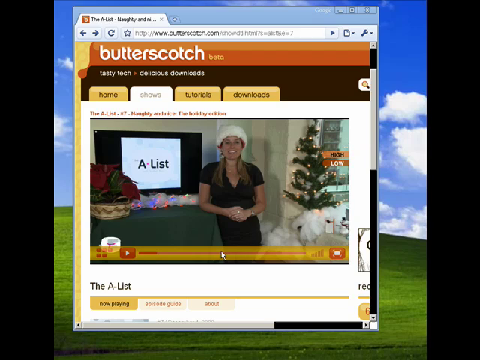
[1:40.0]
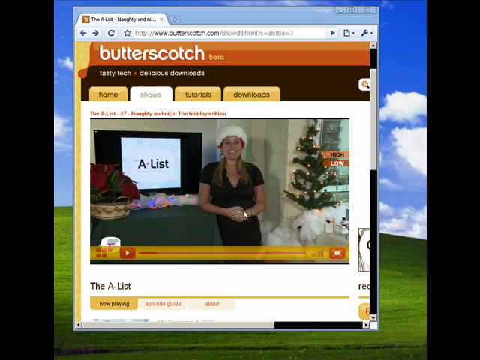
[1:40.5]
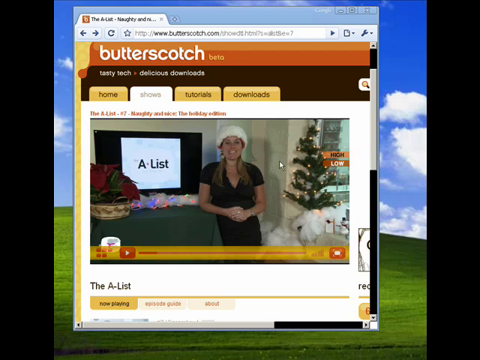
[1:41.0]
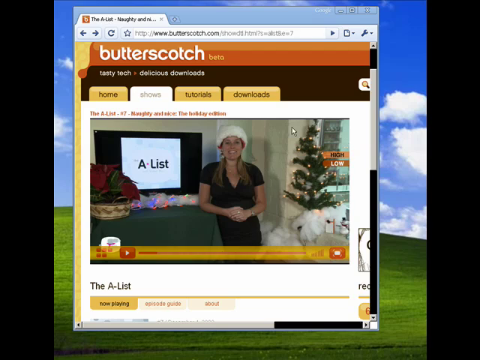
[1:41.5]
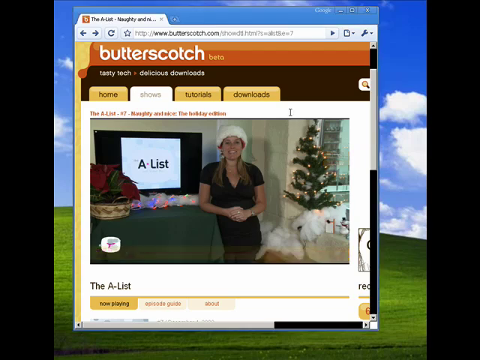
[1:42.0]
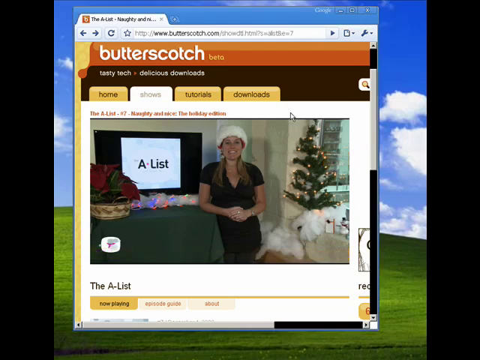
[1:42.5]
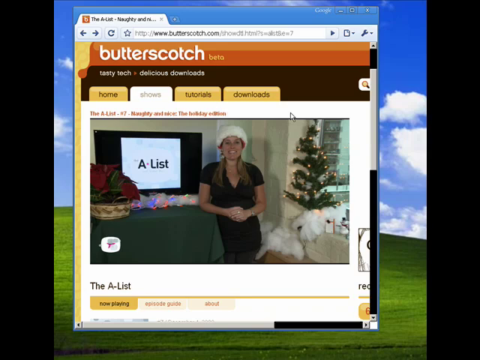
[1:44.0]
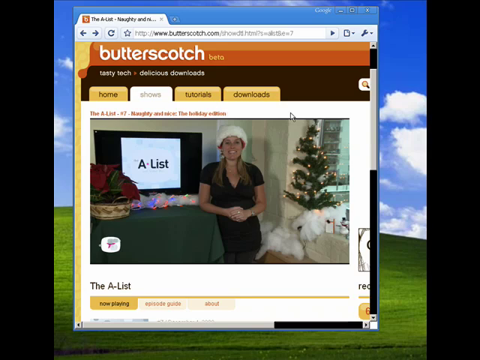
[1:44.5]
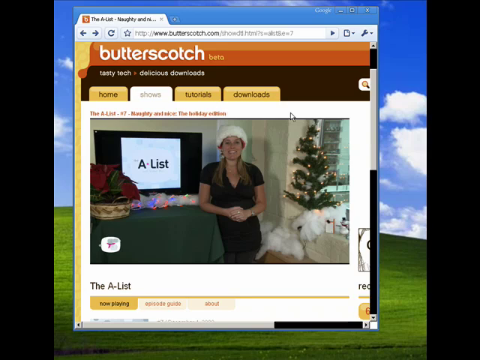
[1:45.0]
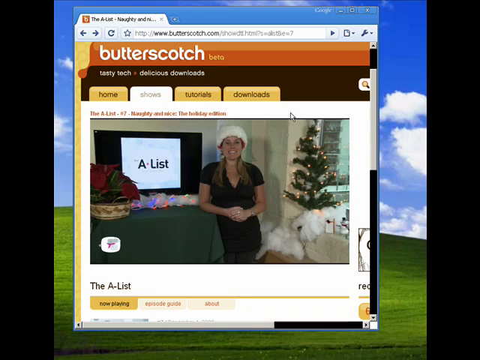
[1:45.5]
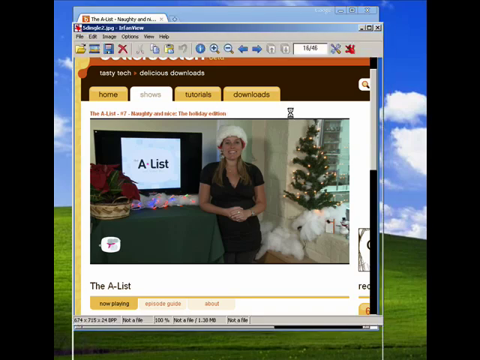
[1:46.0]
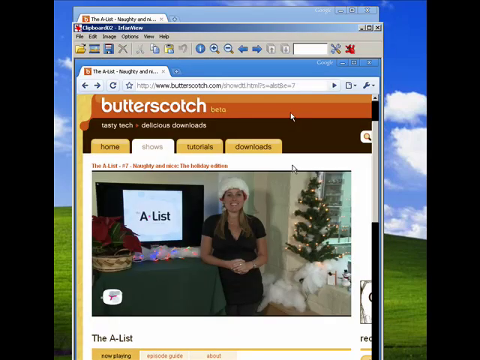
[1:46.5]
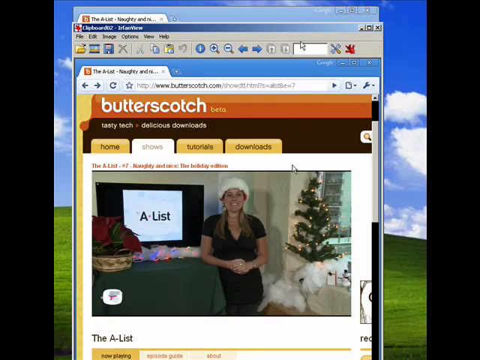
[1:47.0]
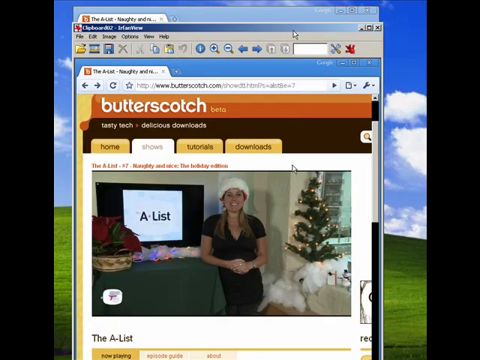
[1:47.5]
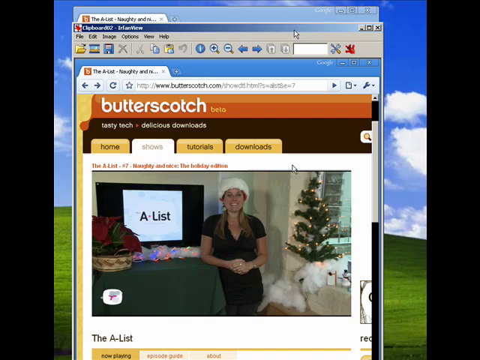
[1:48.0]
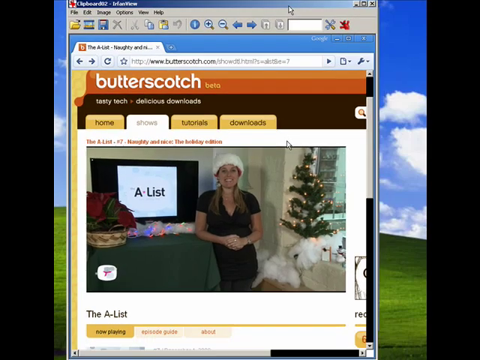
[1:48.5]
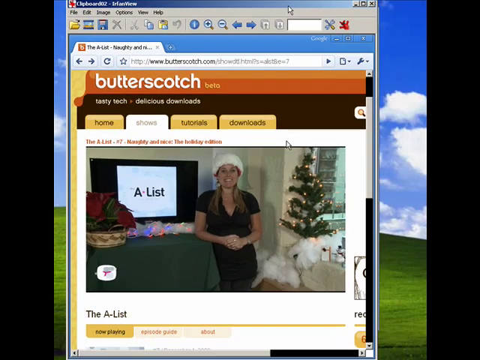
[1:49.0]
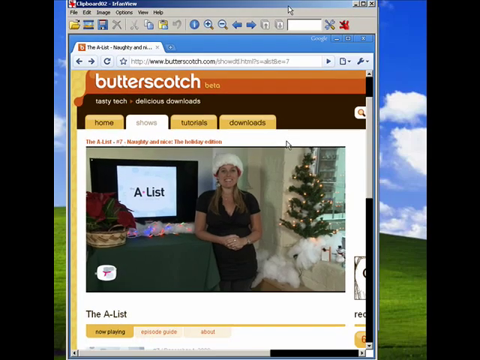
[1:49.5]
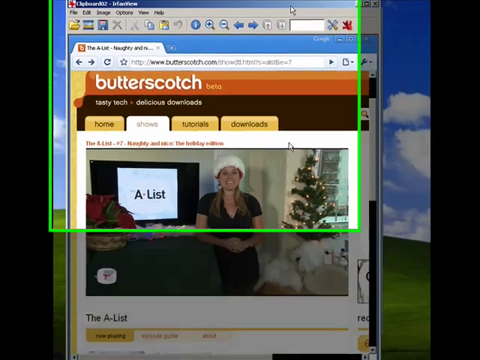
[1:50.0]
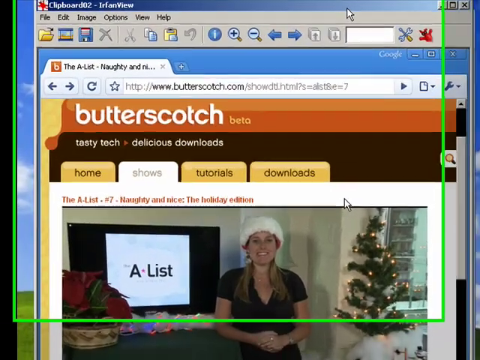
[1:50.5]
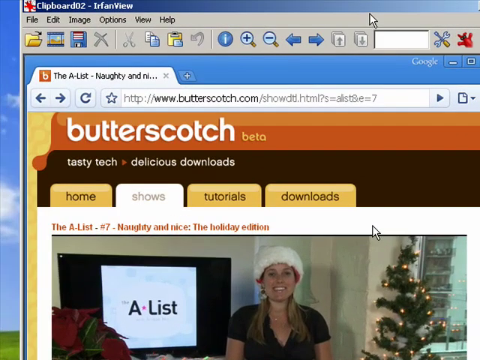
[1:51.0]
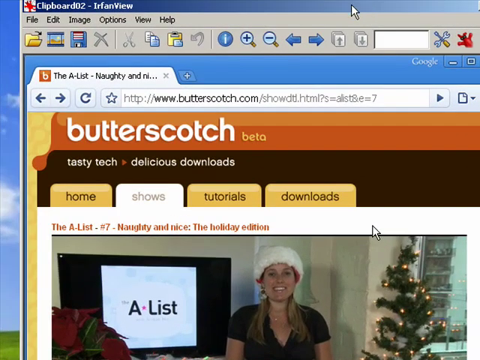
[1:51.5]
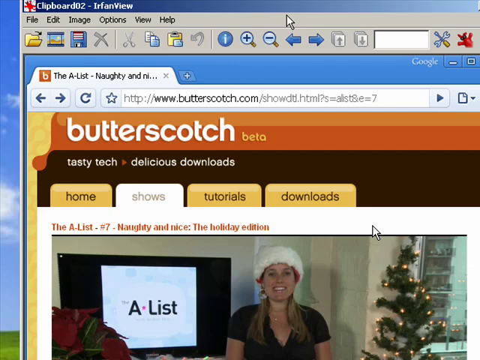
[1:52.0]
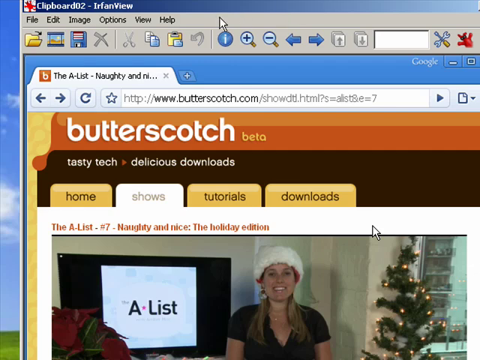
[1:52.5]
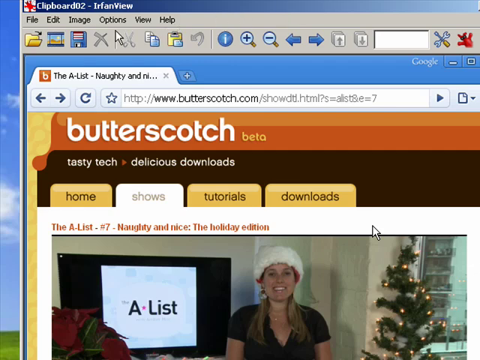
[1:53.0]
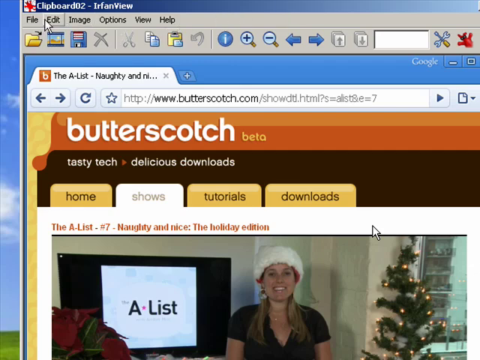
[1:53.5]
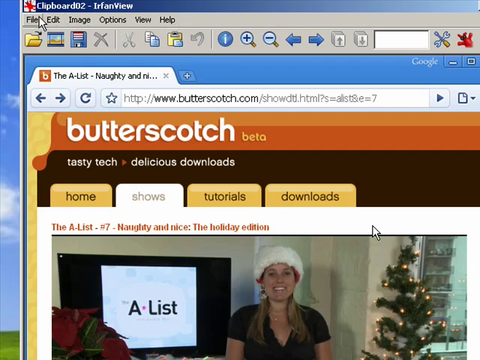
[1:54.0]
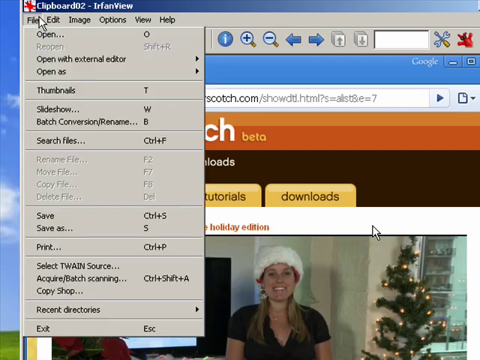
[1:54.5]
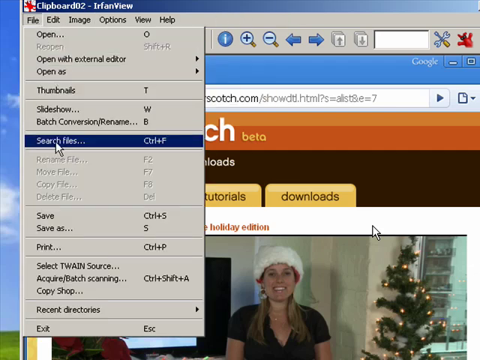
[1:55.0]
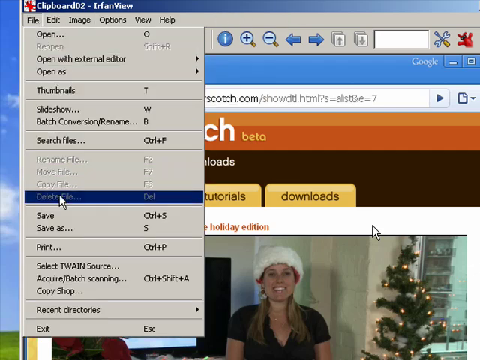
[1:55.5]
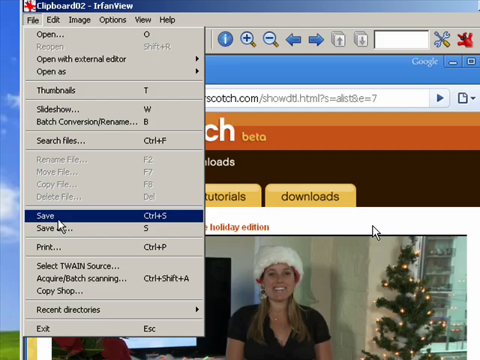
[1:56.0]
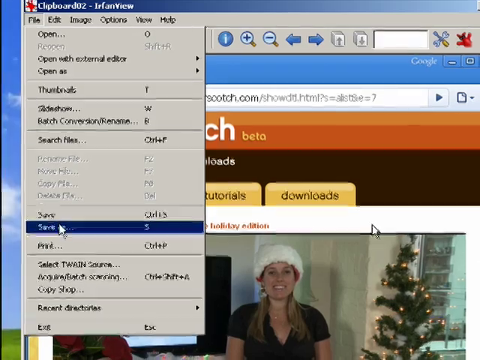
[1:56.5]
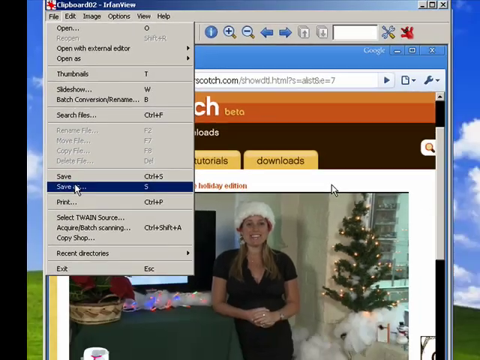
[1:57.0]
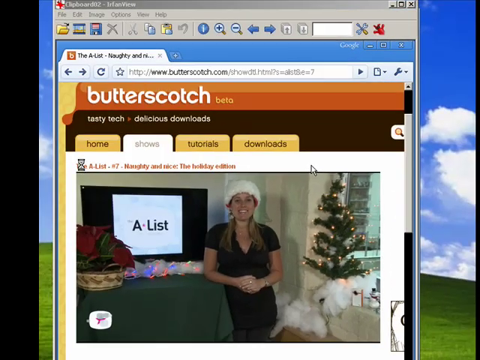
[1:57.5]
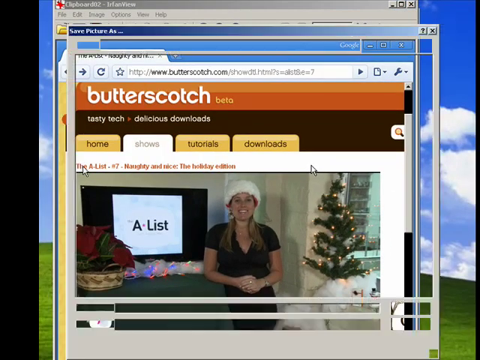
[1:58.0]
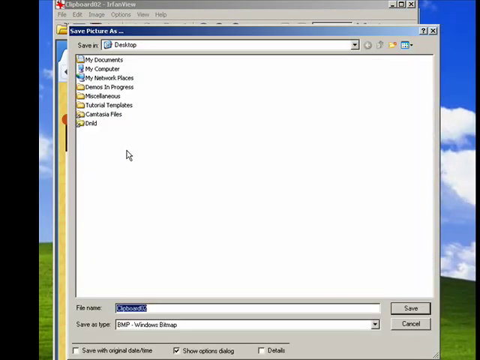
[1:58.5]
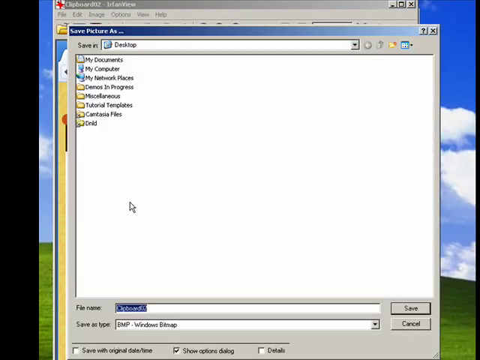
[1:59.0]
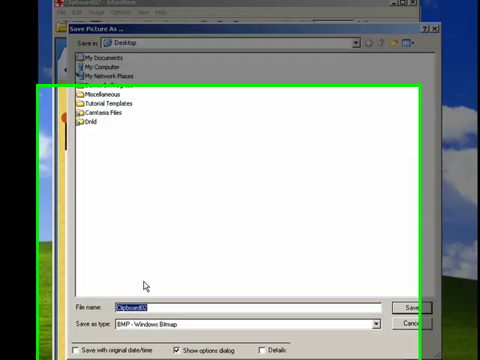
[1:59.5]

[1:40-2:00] The mouse selects the website tab at the back, which now covers the previous image. The tab is on the Butterscotch website, and on its front page is a video showing a woman in a Christmas hat with a Christmas tree in a living room, next to a TV that reads "the A-list". The overall format of the website and desktop appears old, and everything appears to be running on an older version of Windows. The mouse moves the tab further downward. The screen then zooms in to the upper portion of the website, cutting off part of the video and showing the top of the website. He appears to have taken a screenshot, and the zoomed-in part is now on the screenshot. There appear to be several tools at the top. He clicks on a header that reads "File", a drop-down menu appears, and he hovers over "Save as" and clicks it. Another menu pops up showing "Save picture as", prompting for a file name and a save location.